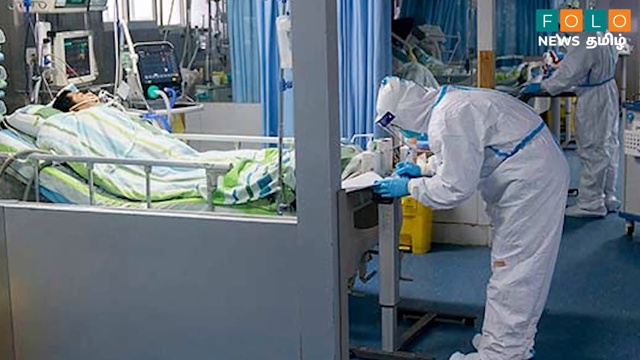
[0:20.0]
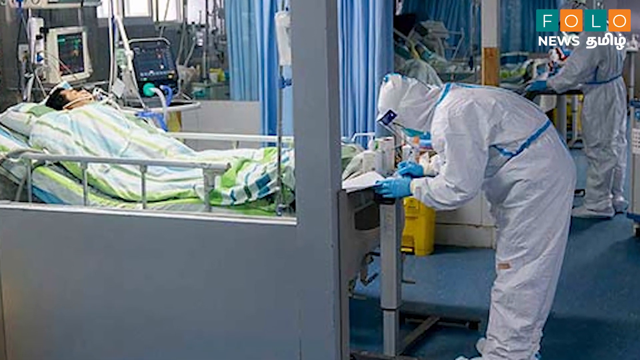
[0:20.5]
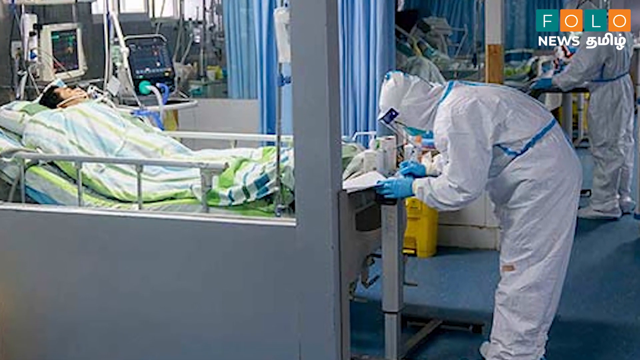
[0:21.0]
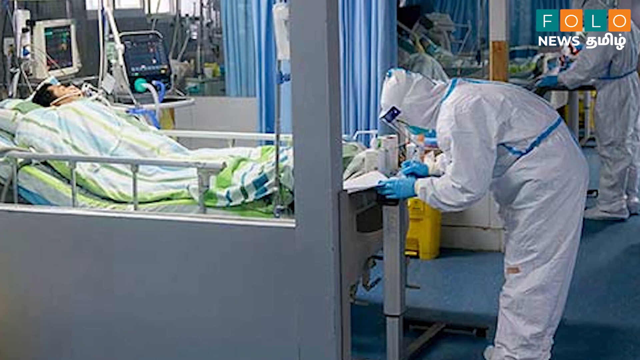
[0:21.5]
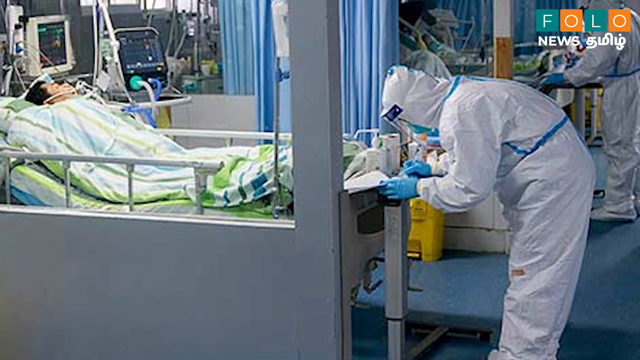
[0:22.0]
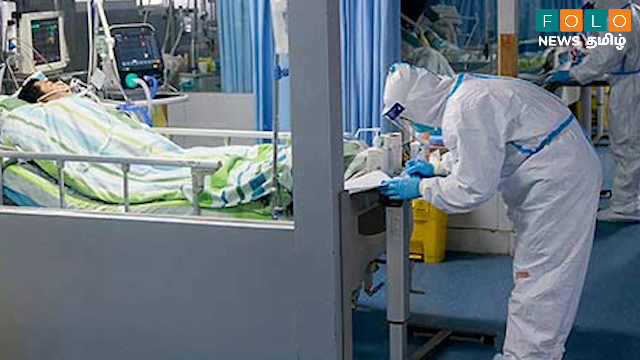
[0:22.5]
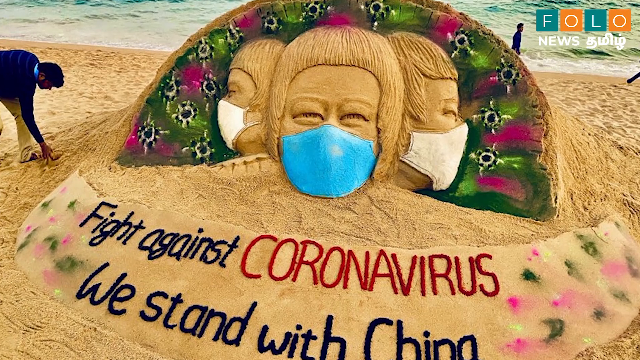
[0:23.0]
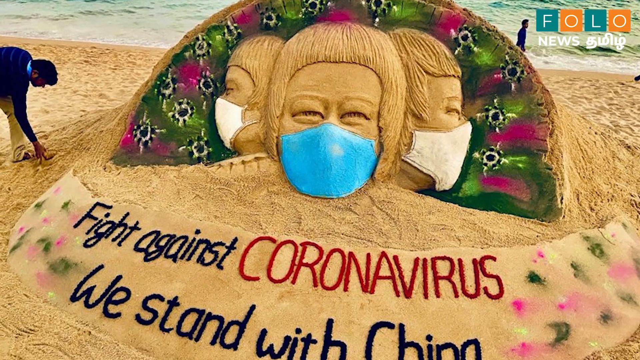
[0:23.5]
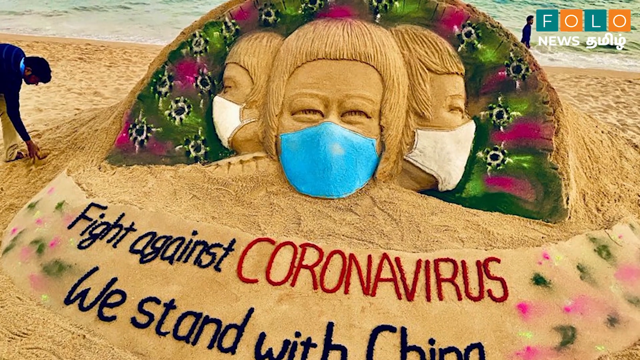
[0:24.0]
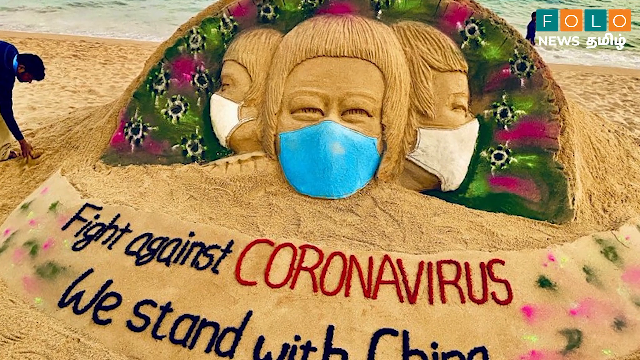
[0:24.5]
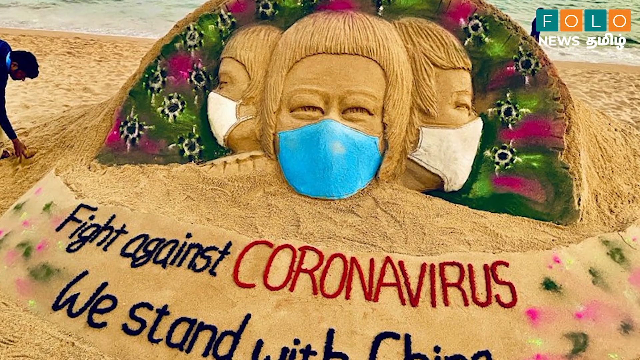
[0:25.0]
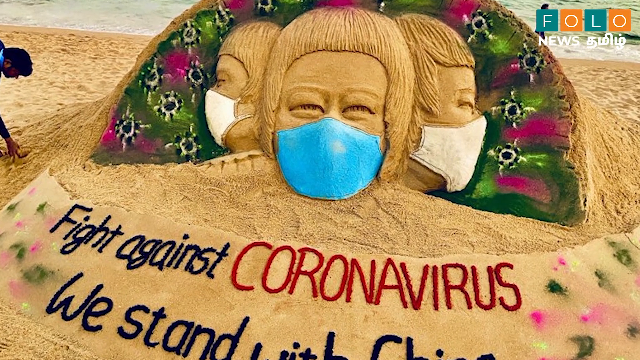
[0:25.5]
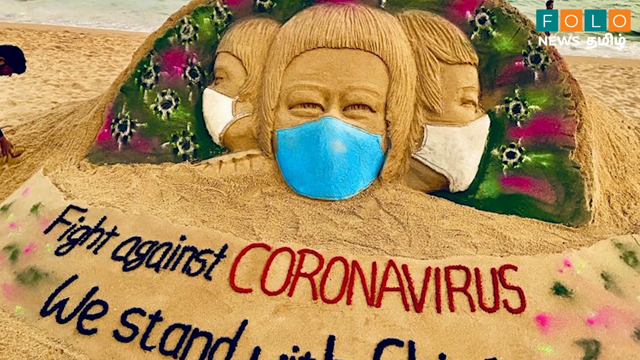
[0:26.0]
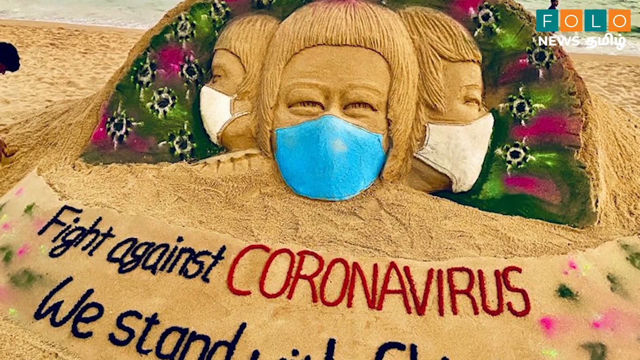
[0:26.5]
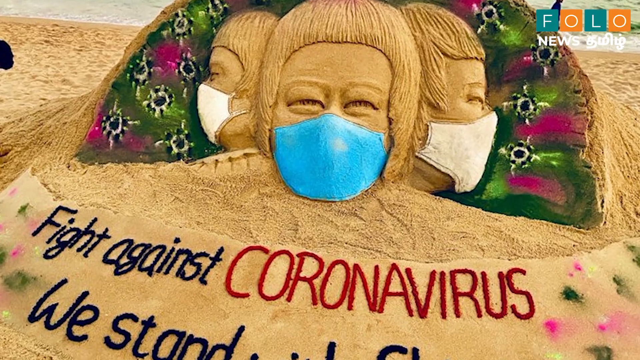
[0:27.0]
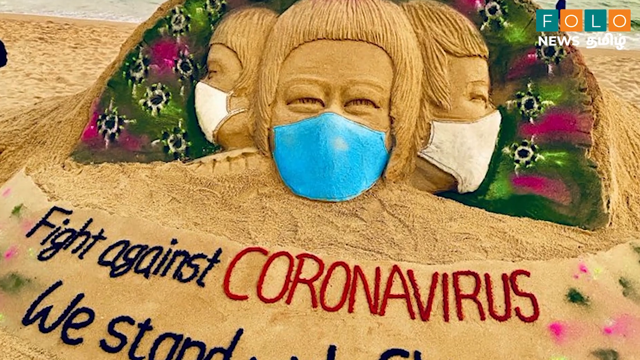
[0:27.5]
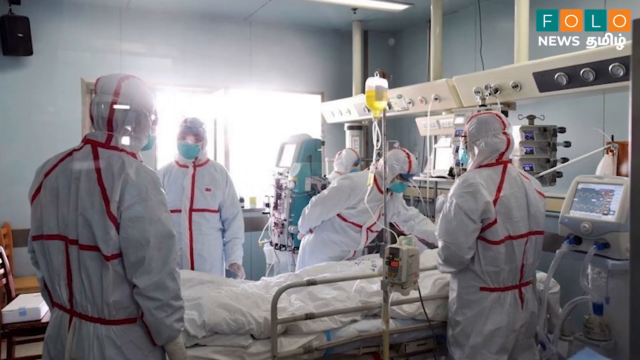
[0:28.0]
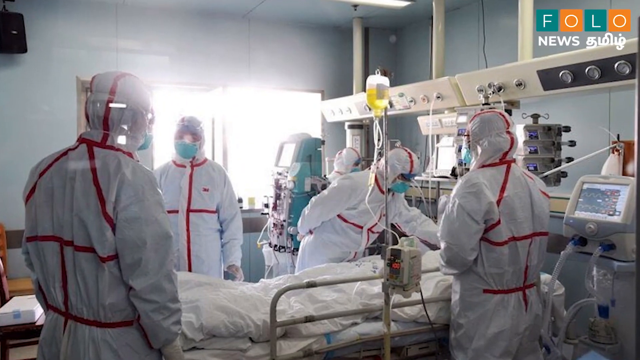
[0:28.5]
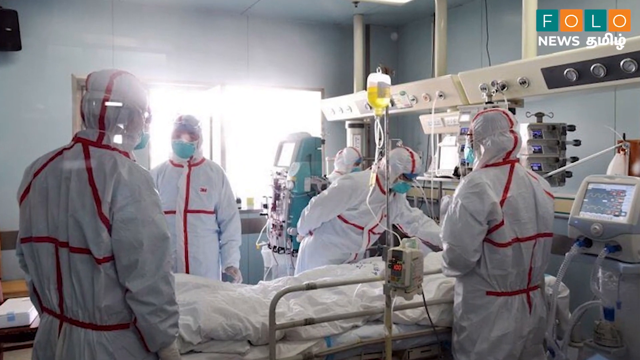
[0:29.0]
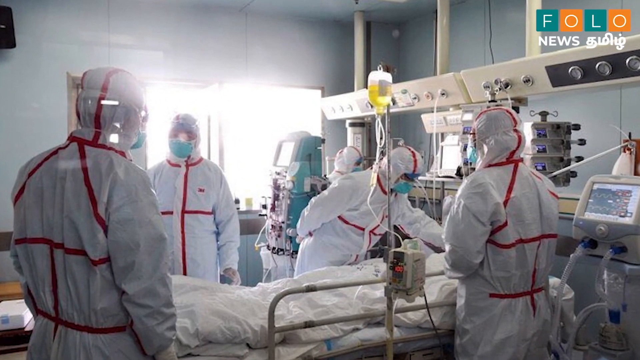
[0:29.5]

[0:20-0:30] What appears to be a young man lies in bed, covered in blankets and hooked up to a respirator, while health care workers stand at the foot of the bed taking notes. Just past a curtain, another person lies in bed with another health care worker in a hazmat suit; the setting seems to be the intensive care unit of a hospital. Next comes a picture of a sand sculpture on the beach featuring the words "fight against coronavirus. We stand with China." It shows three people's heads carved out of sand, wearing masks: two masks are white and one is blue. Behind them the sand is apparently spray-painted to look like the coronavirus in green and kind of magenta, with kind of white and blue spikes, and people walk on the beach. The video then cuts to a photo of more health care workers in hazmat suits in the hospital.